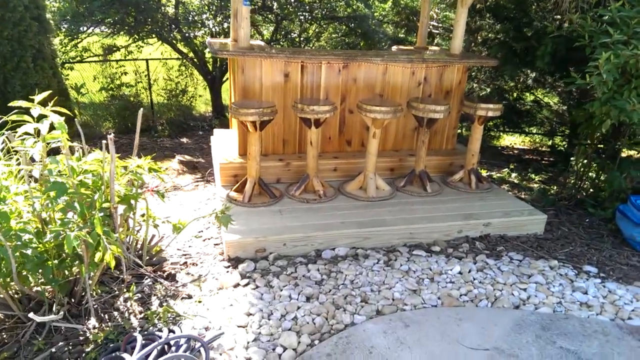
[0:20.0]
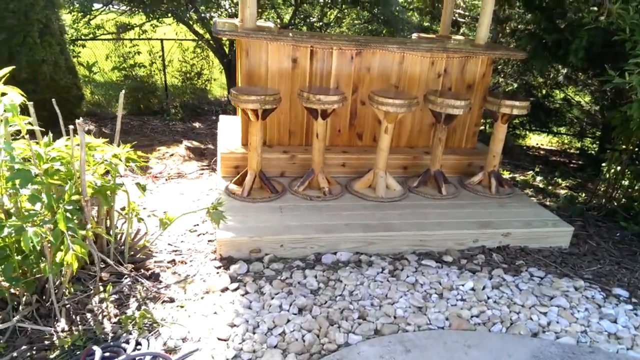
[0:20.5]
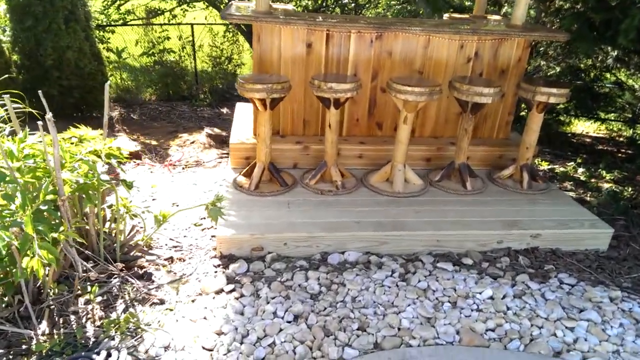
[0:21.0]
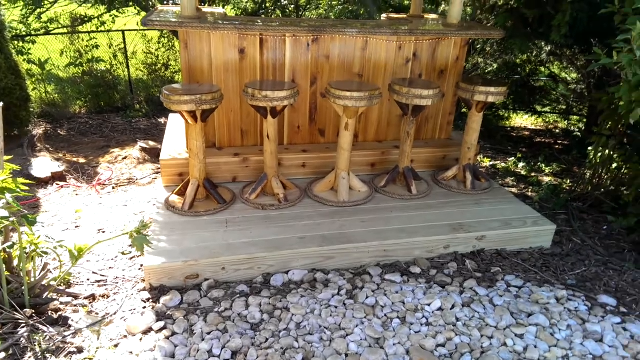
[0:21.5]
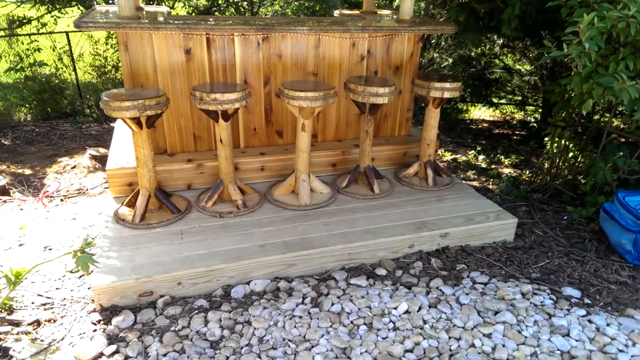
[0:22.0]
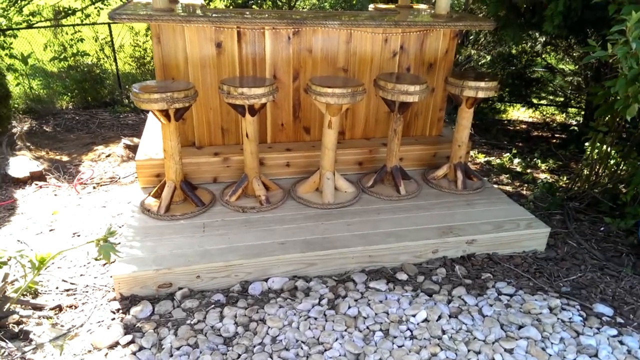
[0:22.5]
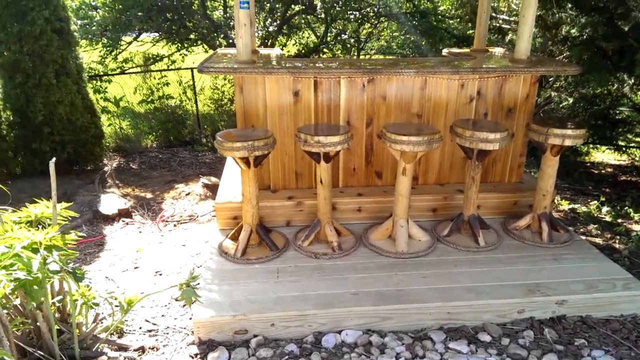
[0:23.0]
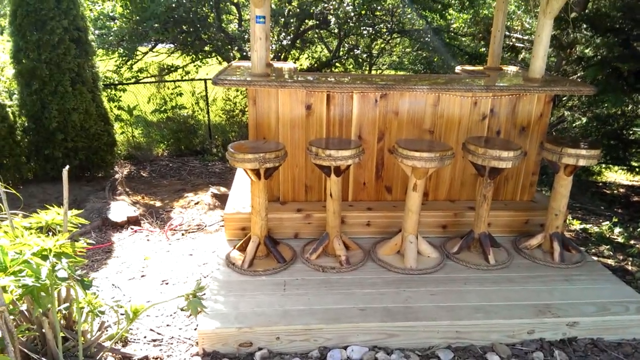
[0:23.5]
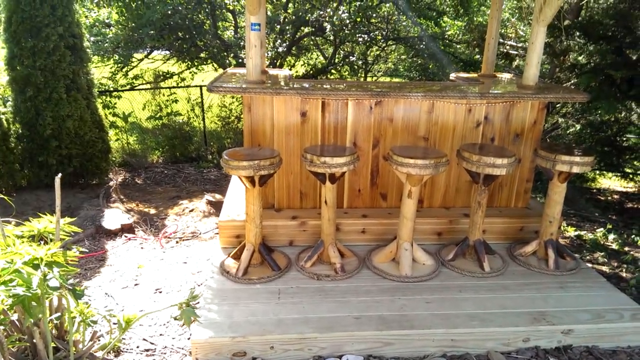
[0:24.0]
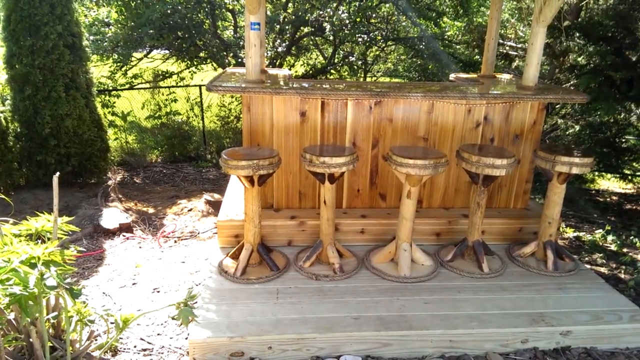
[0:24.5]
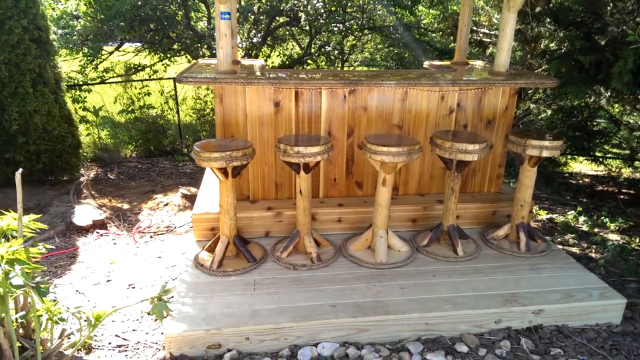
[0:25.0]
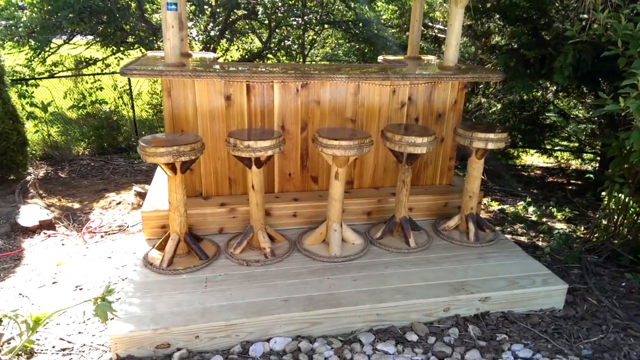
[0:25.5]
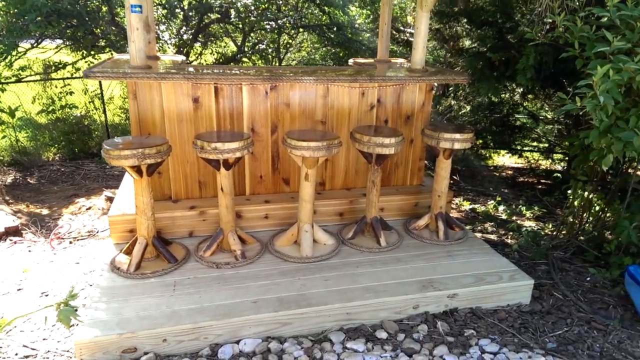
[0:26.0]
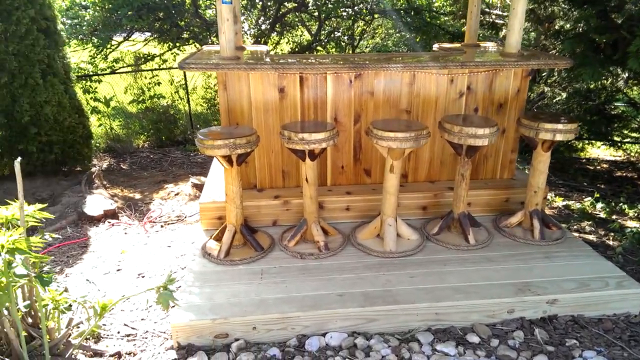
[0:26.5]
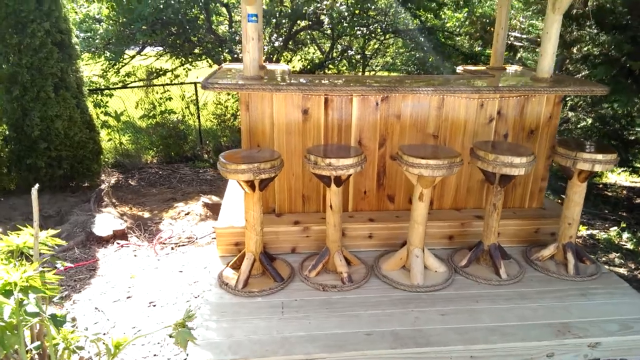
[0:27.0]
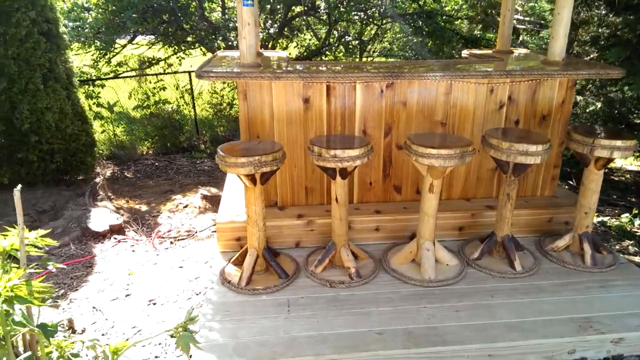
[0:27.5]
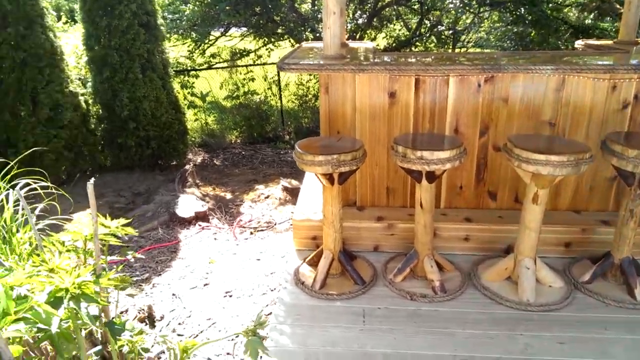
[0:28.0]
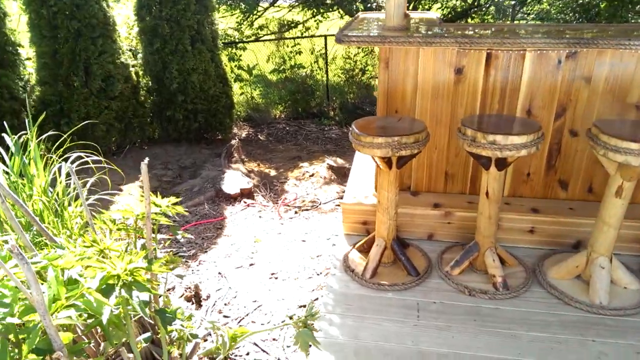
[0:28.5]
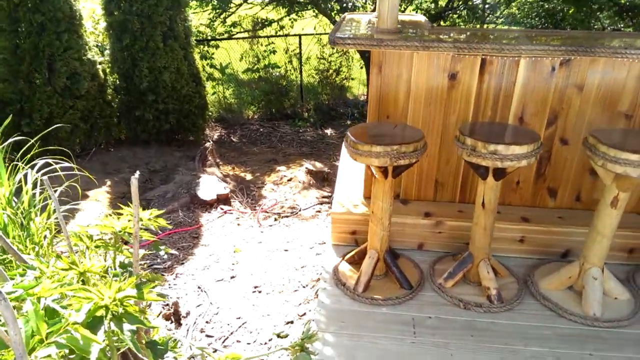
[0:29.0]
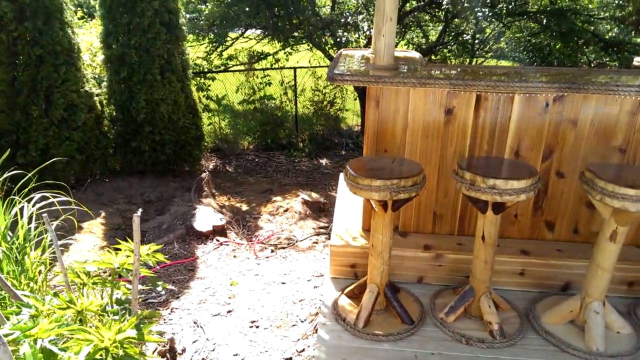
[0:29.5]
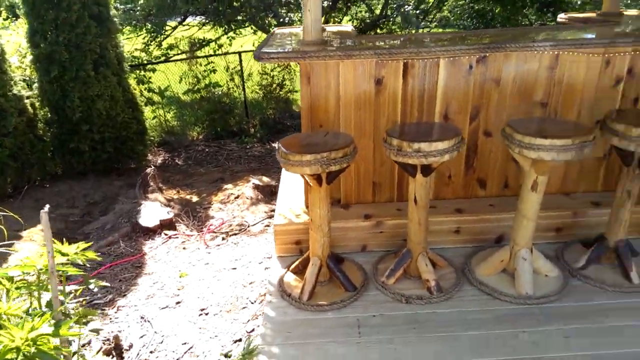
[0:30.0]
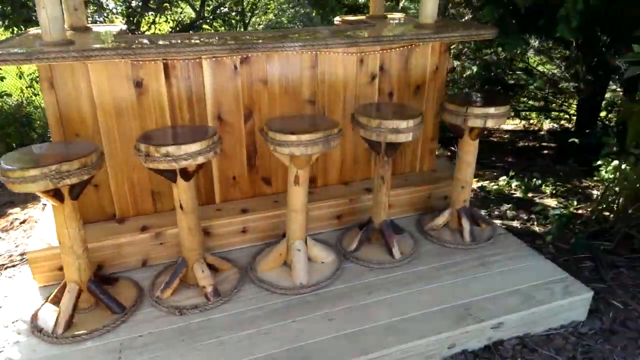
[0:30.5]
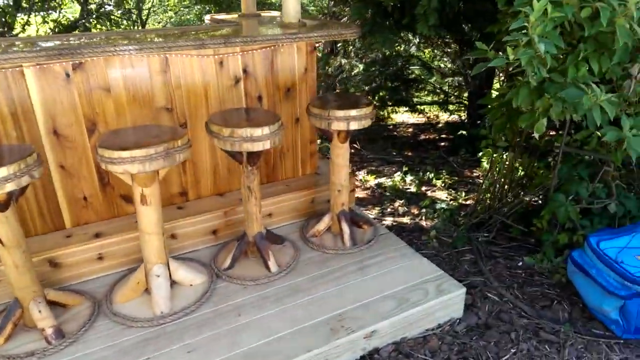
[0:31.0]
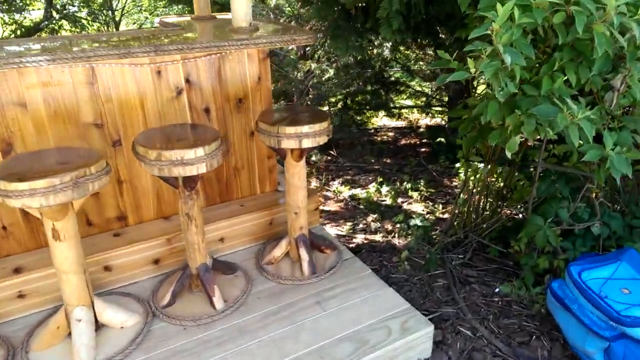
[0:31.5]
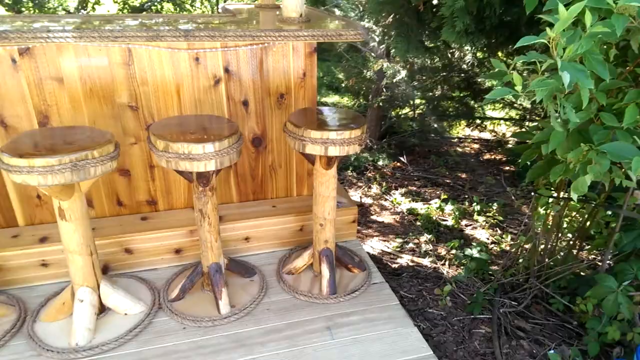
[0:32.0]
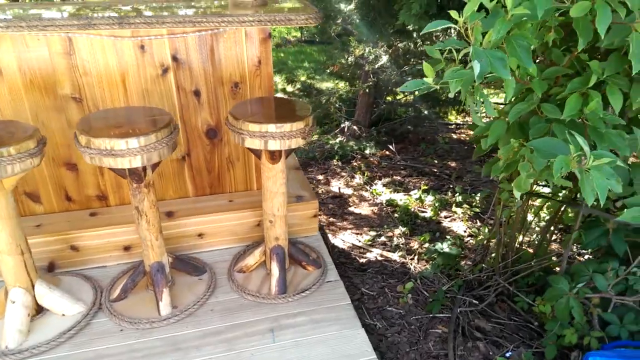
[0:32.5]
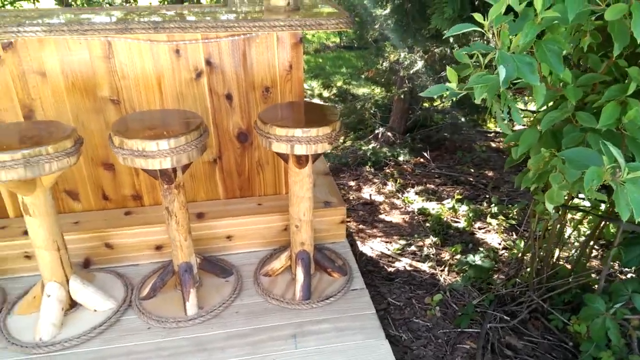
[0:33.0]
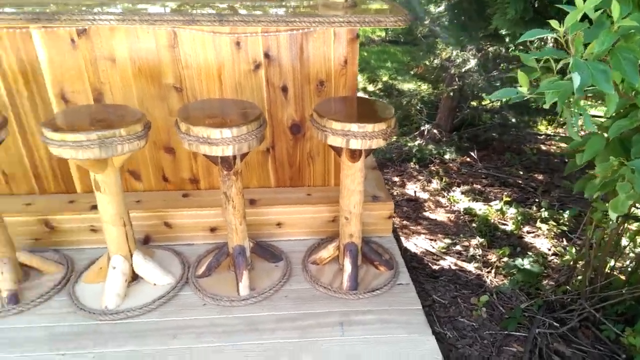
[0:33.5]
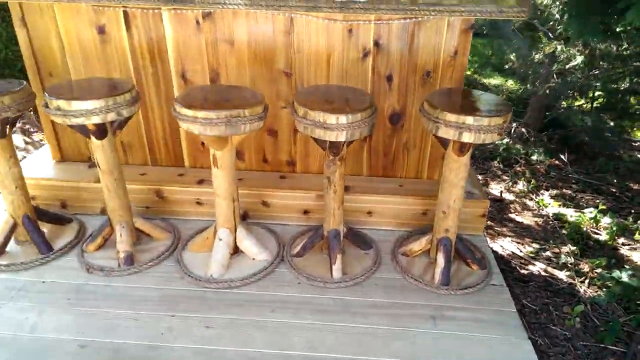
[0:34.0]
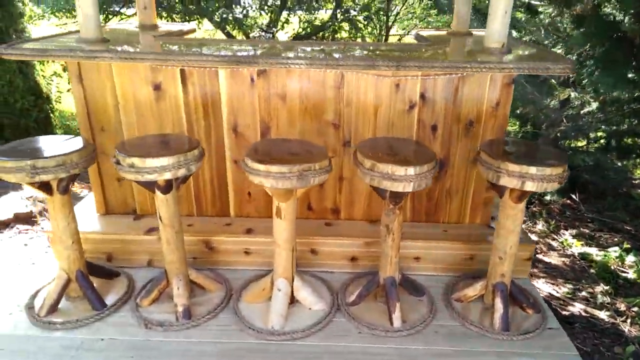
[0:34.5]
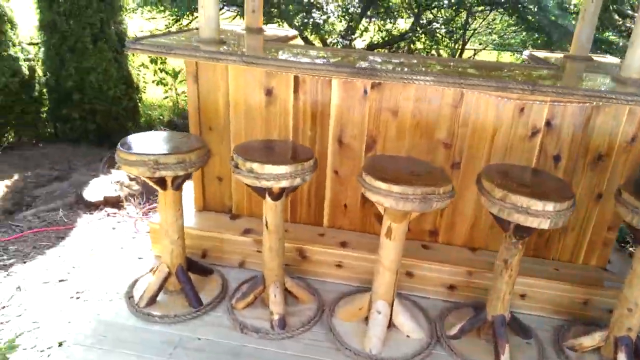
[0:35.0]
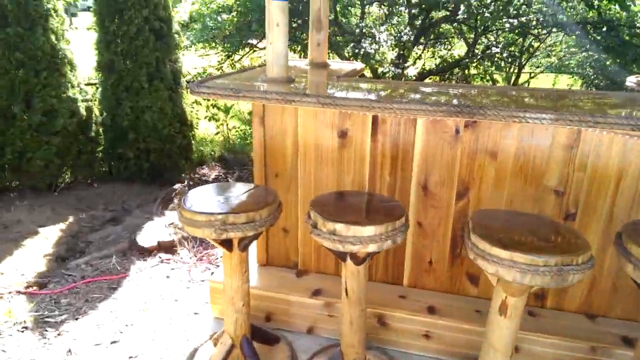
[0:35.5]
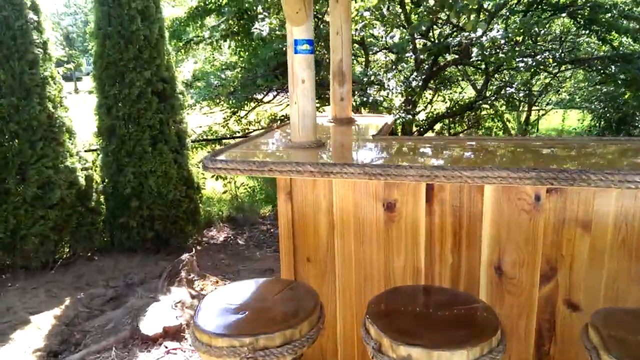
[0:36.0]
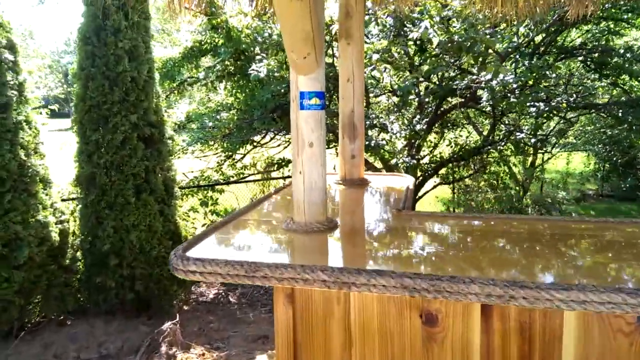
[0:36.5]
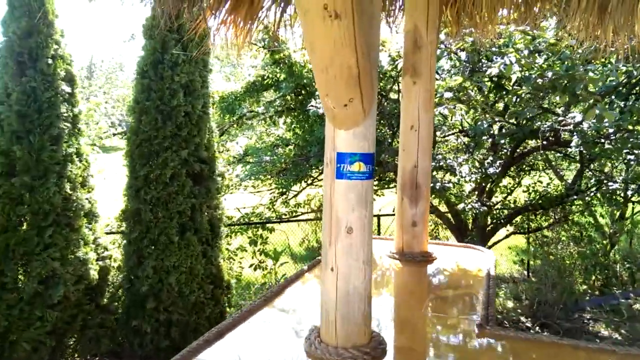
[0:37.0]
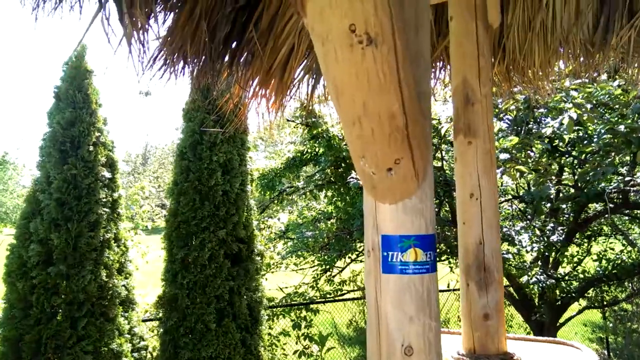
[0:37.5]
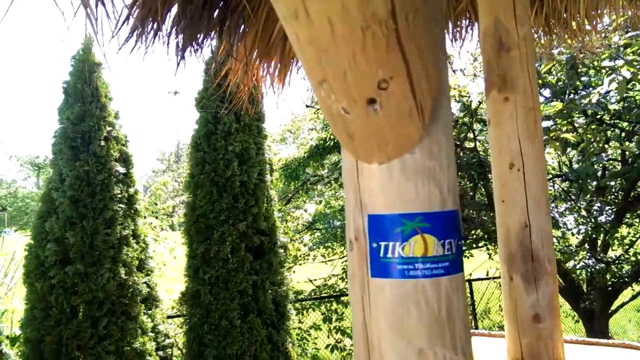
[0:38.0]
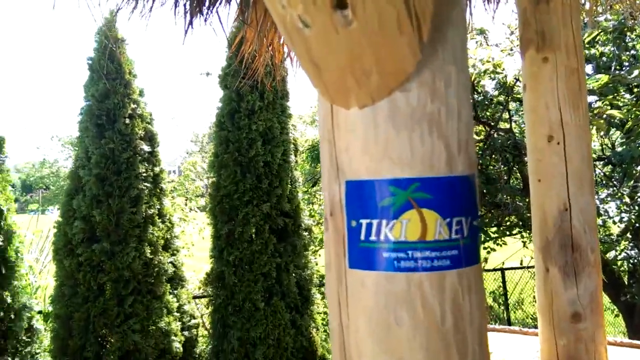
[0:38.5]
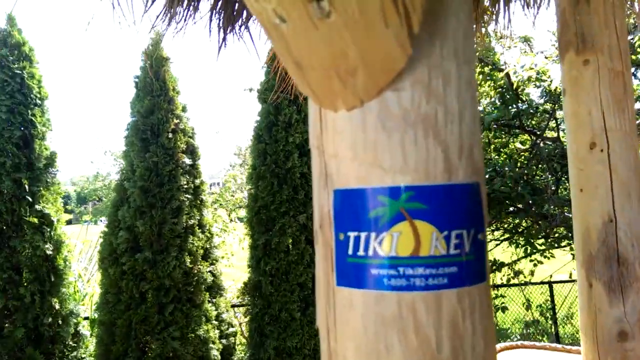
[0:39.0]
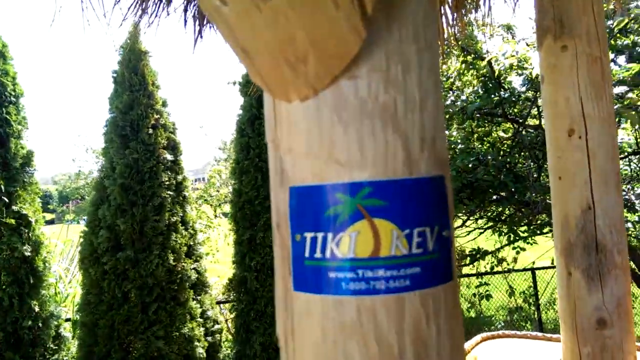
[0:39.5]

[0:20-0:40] A small wooden bar stands outside, surrounded by trees, with some green plants to the left side. Gray stone pebbles and small rocks cover the ground in front of the bar. Five wooden bar stools are arranged along the front of the bar. The bar is built on a square concrete foundation that looks grayish. The camera pans closer; it is slightly shaky but still gives a good view of the wooden bar. The top of the countertop seems to be made of some sort of shiny material that is not wood. The camera moves closer and slightly to the right, showing the dense green vegetation surrounding the bar area, then pans to the left to show two small trees. It then moves closer to one of the bar's wooden beams, which has a blue sticker on it. The sticker shows a rising sun, a palm tree and the words "Tiki Kev".